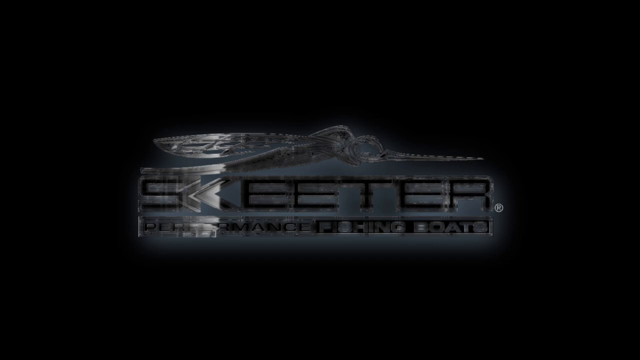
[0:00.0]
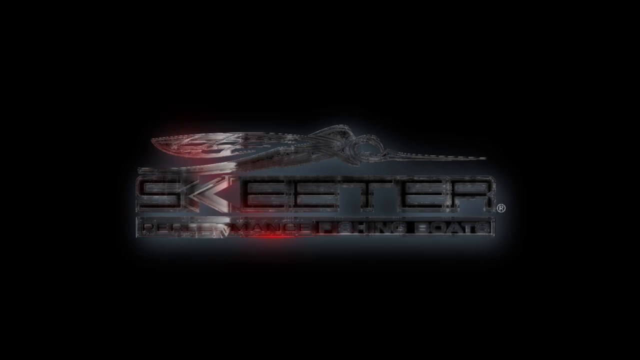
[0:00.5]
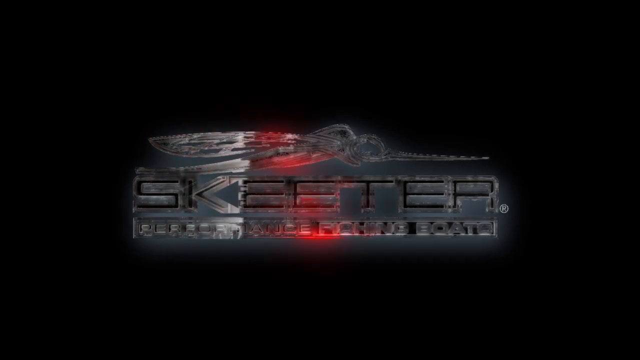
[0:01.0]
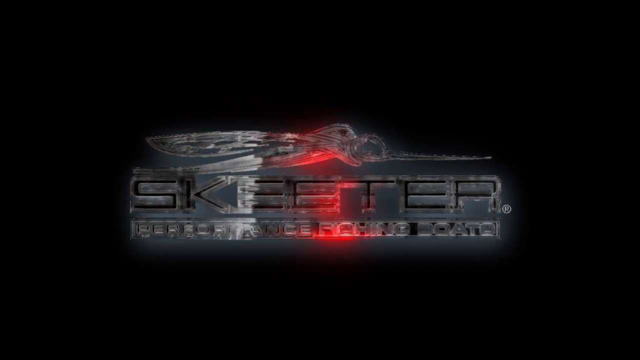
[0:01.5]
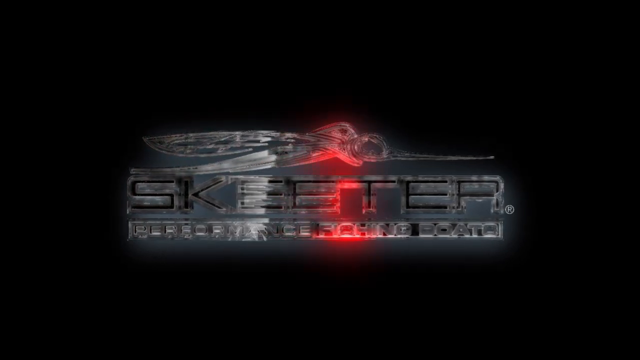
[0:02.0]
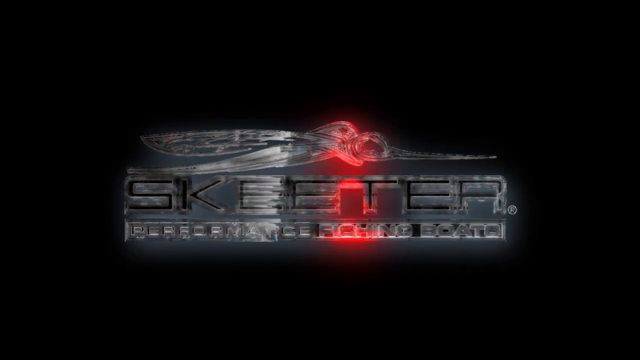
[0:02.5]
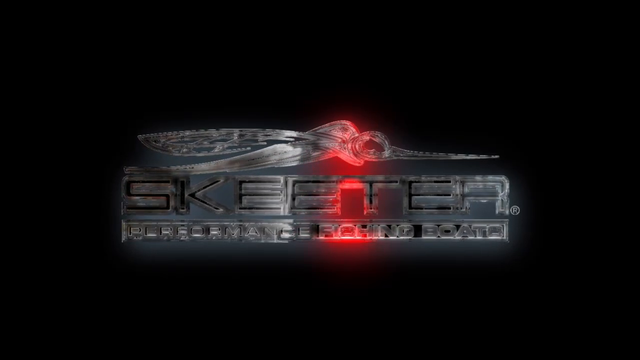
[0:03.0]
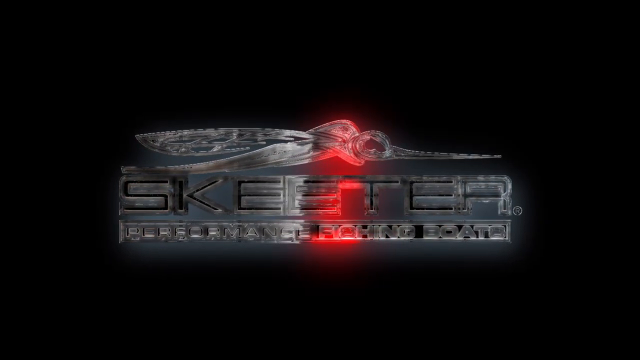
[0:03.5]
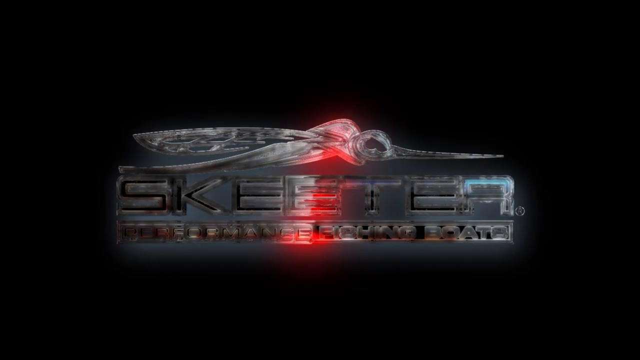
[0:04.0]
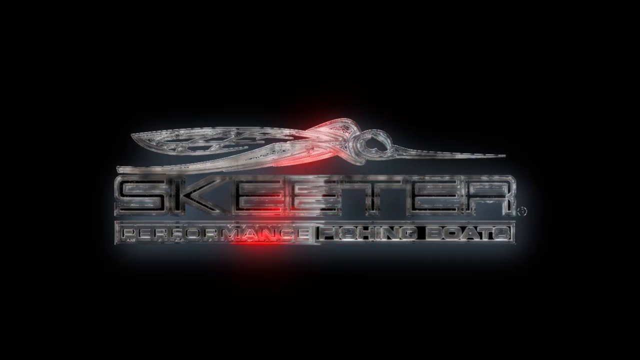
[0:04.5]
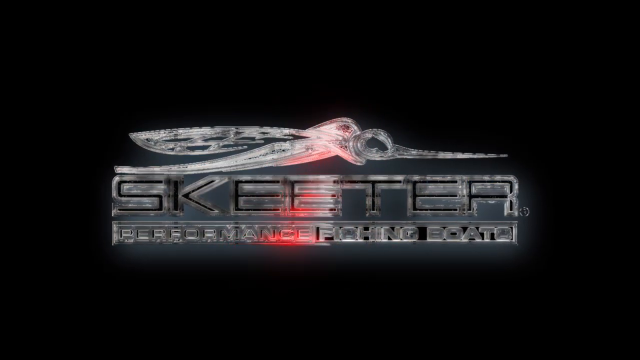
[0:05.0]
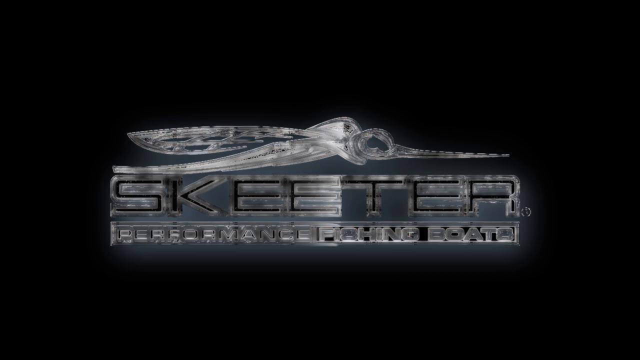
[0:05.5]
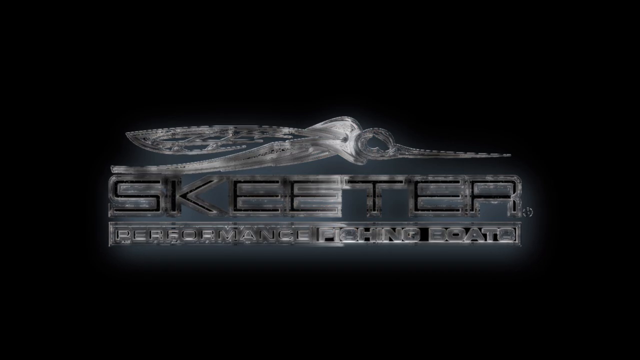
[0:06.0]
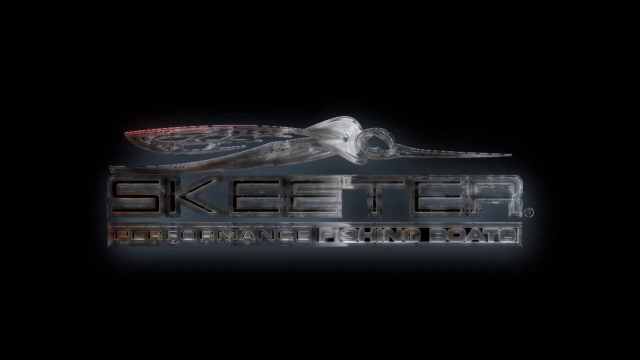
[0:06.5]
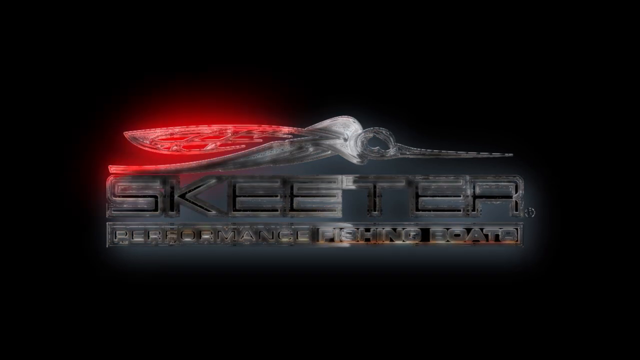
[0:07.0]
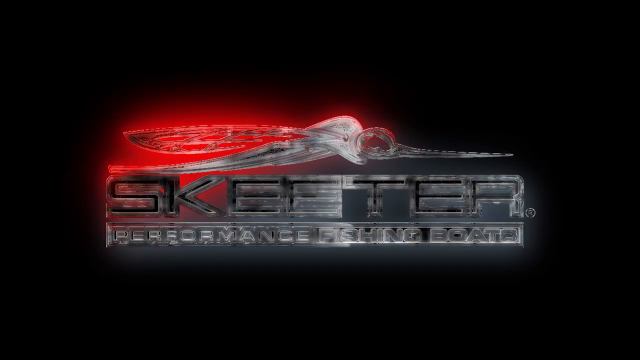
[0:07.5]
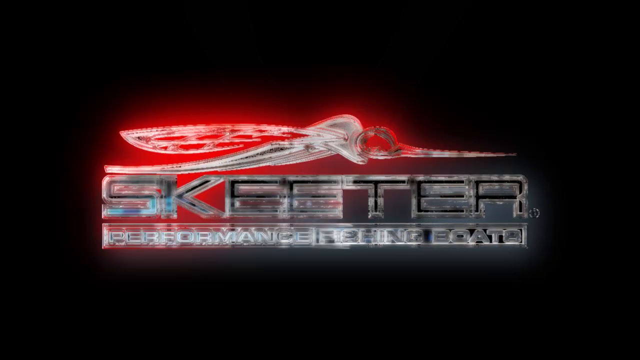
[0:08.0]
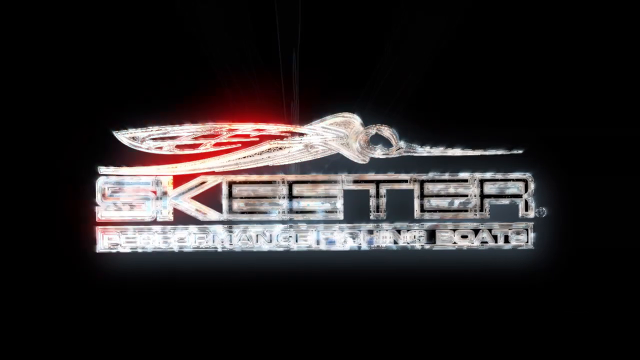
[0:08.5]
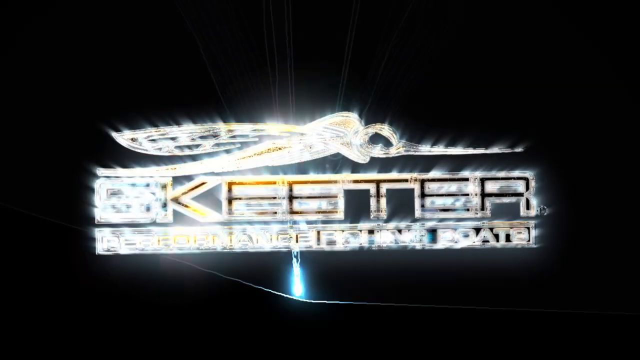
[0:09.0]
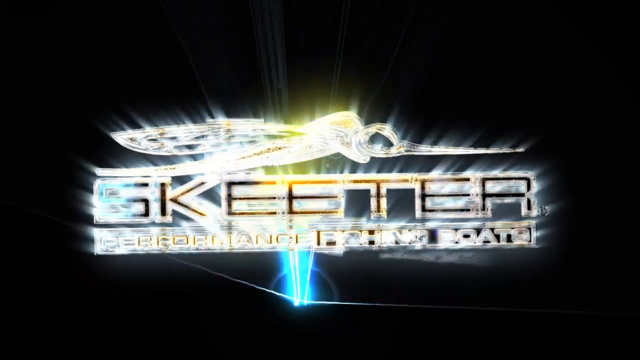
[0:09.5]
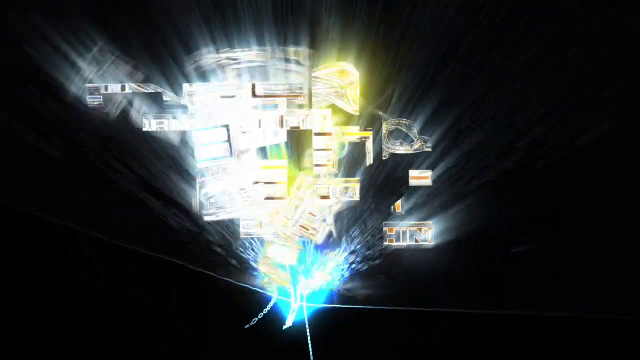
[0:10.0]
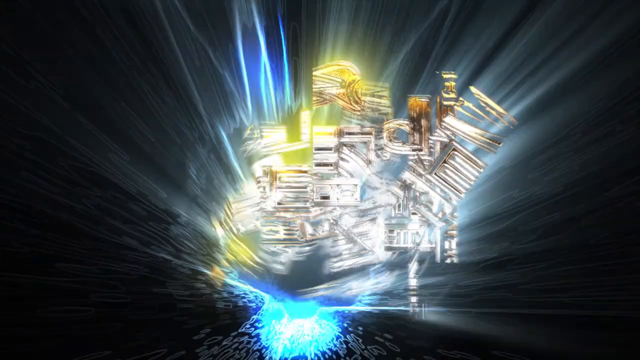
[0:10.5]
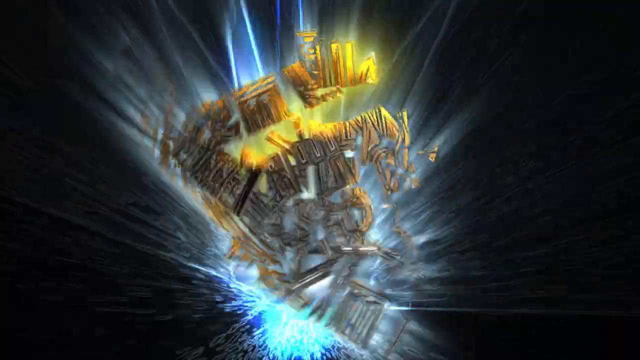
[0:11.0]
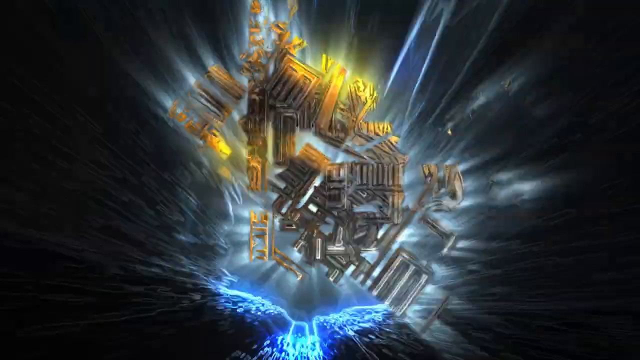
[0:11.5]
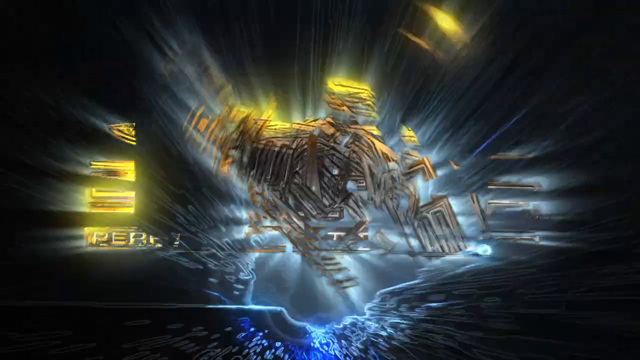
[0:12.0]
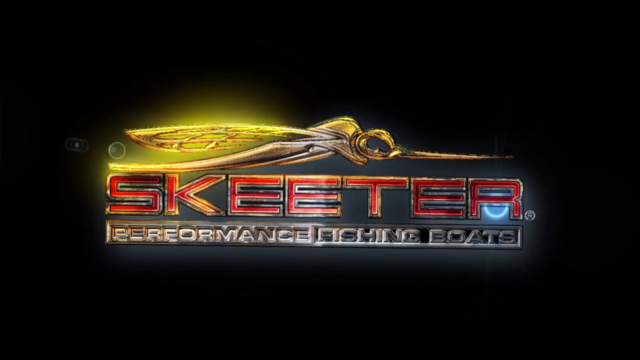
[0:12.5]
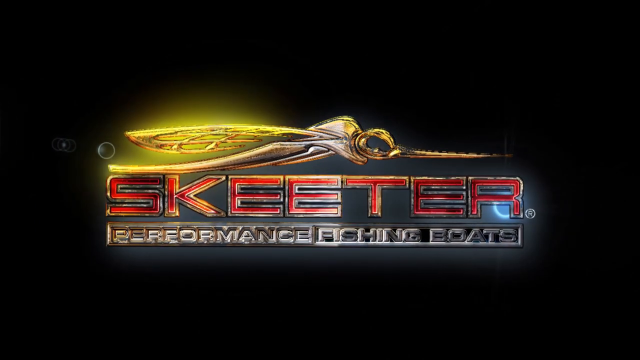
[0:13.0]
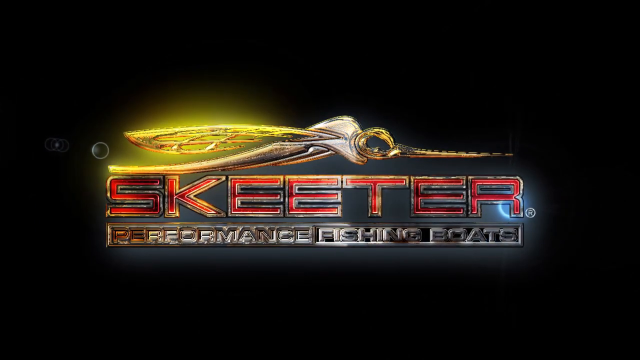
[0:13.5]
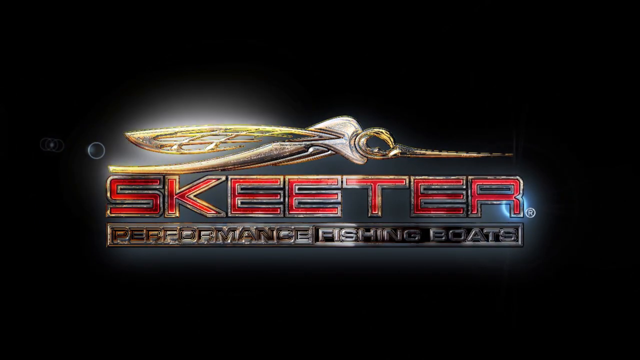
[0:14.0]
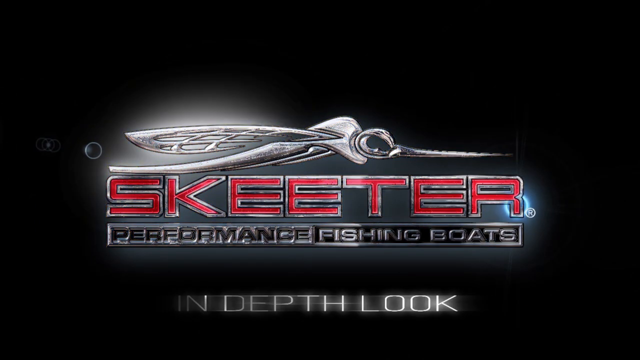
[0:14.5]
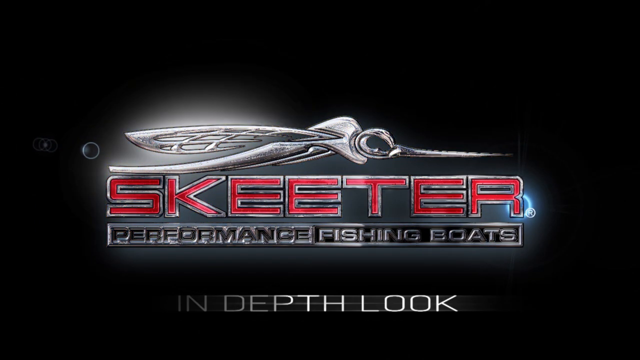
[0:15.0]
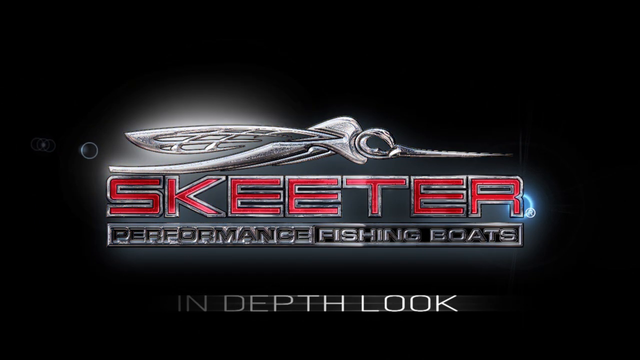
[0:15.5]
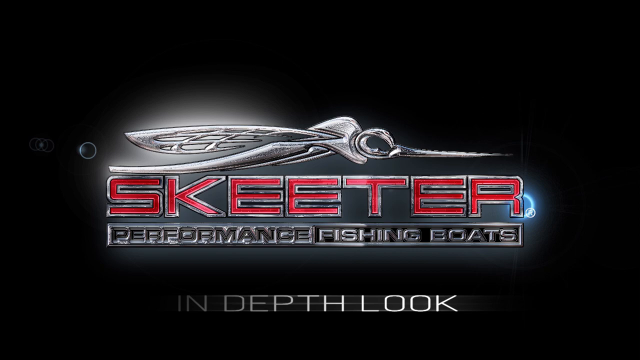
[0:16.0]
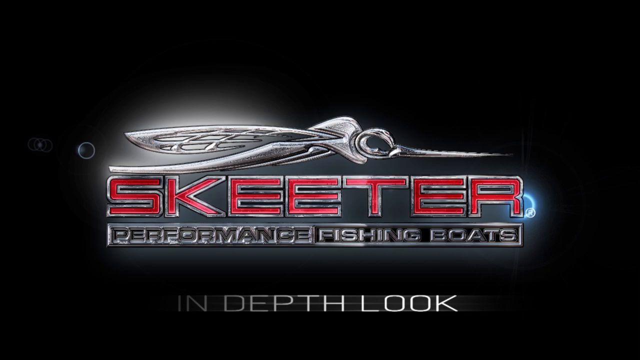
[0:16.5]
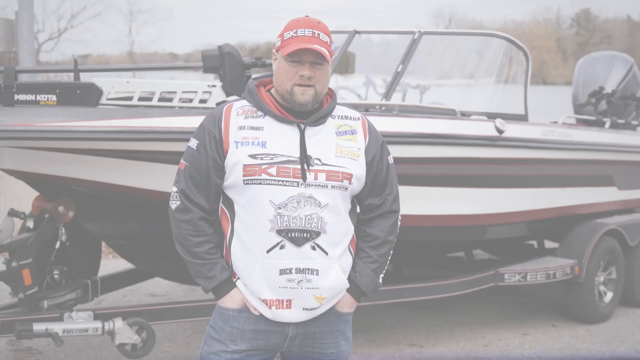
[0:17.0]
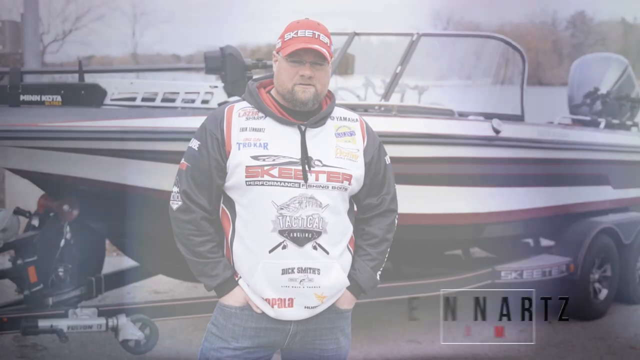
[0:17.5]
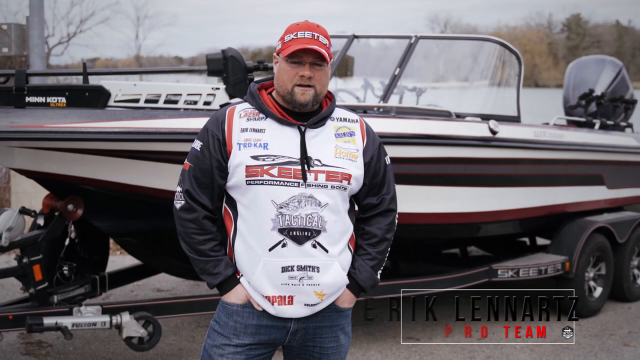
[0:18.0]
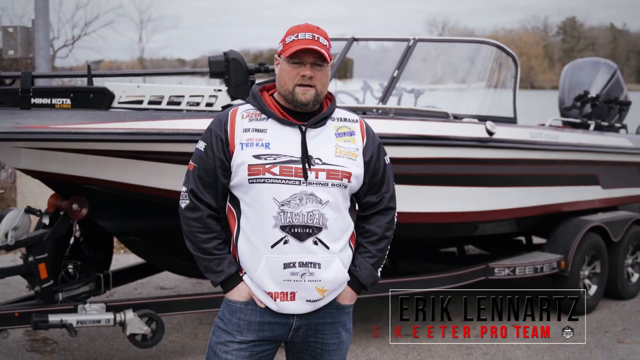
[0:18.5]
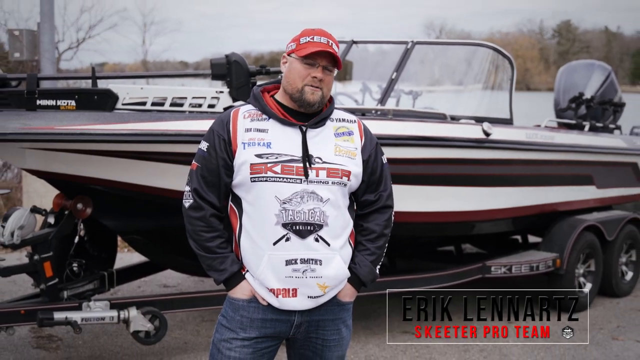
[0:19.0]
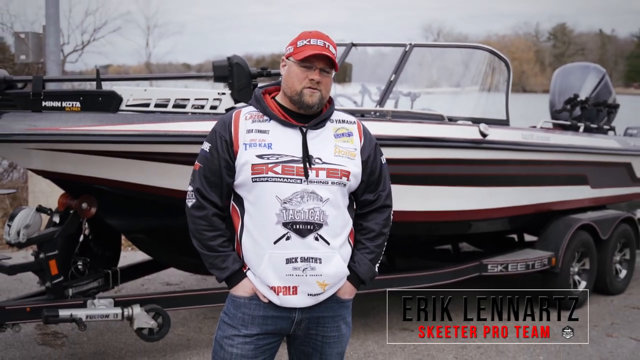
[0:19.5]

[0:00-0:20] The video opens with a logo on the screen that reads "Skeeter" and "Performance Fishing Boats." It then transitions to the full logo, which is very colorful, with reds, golds, yellows, silvers and bronze throughout; a mosquito appears to be the brand's mascot. Underneath, it reads "In-Depth Look." Next, a man talks on screen. He wears a branded shirt with "Skeeter" across the middle and a number of the brand's logos, and text in the lower right identifies him as "Erik Lenartz, Skeeter Pro Team."